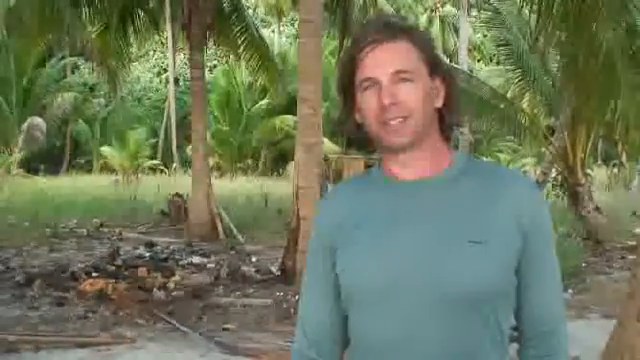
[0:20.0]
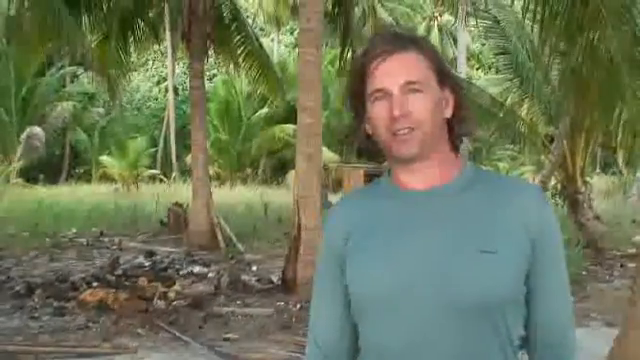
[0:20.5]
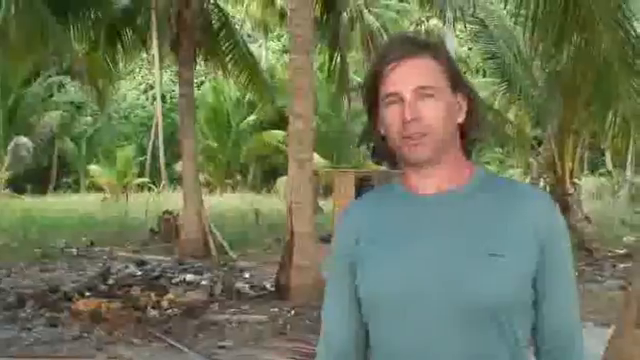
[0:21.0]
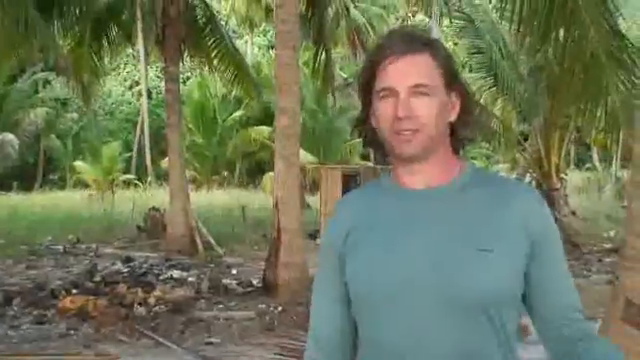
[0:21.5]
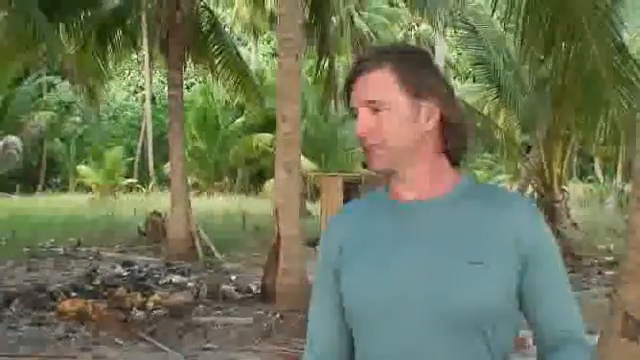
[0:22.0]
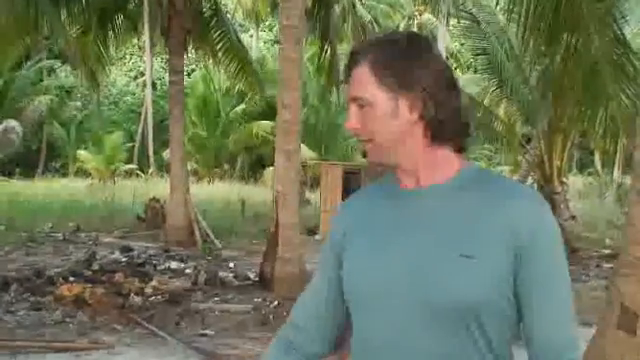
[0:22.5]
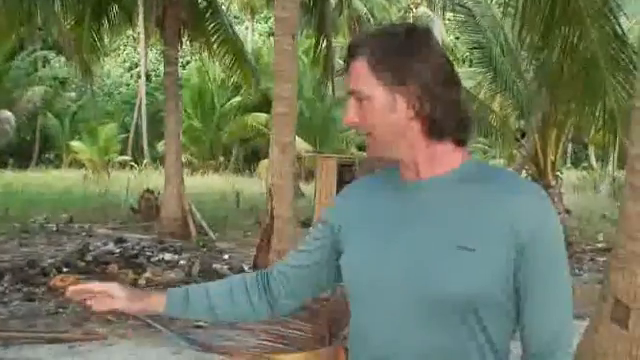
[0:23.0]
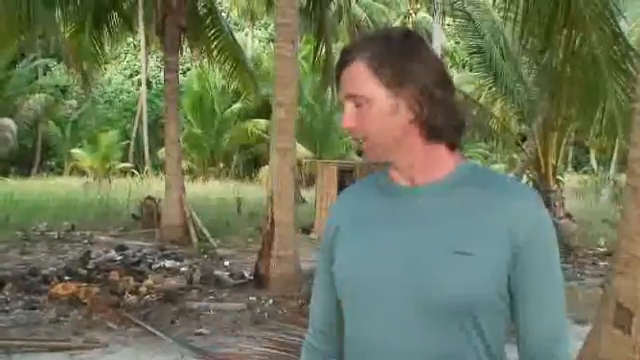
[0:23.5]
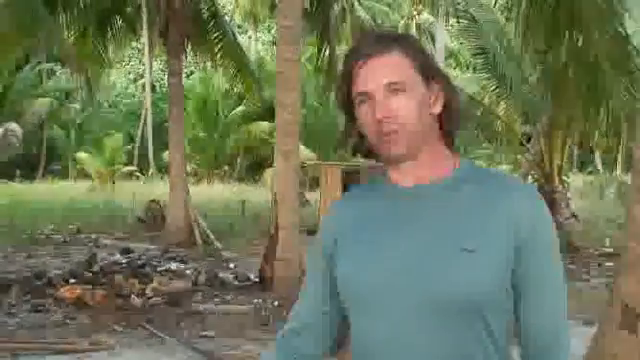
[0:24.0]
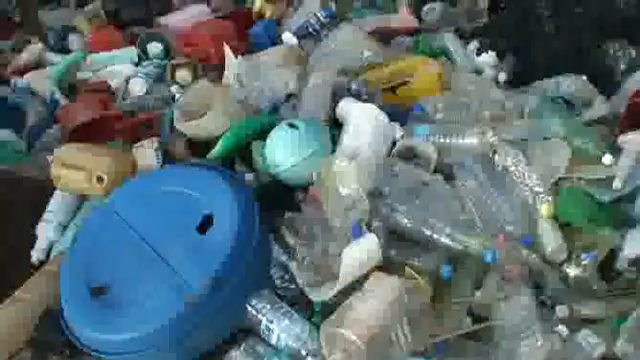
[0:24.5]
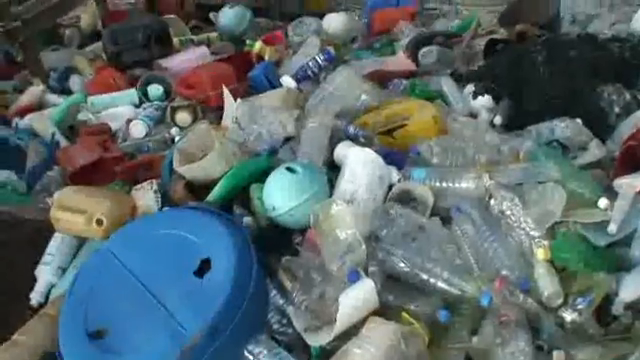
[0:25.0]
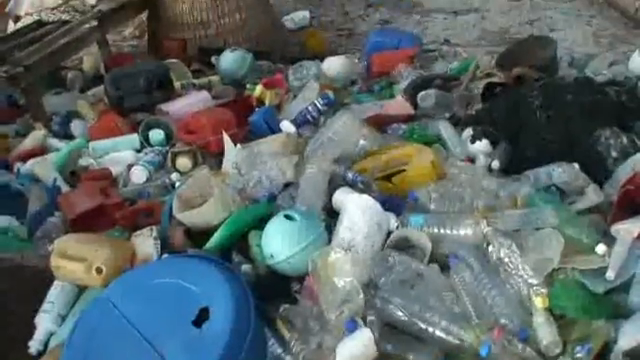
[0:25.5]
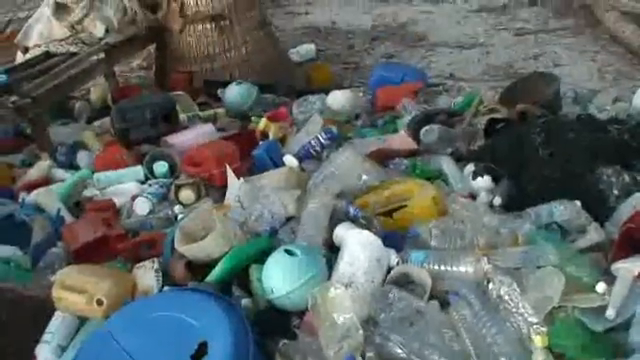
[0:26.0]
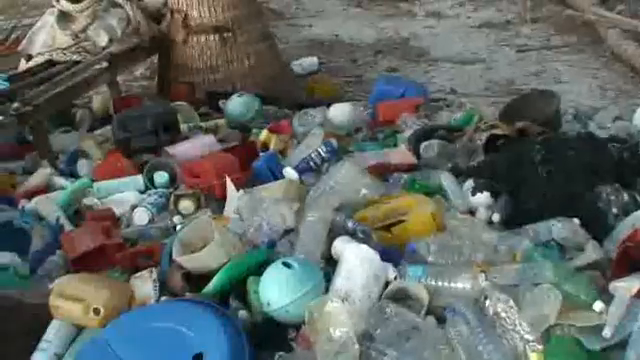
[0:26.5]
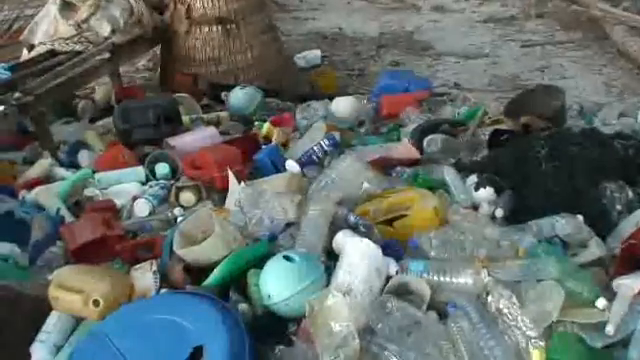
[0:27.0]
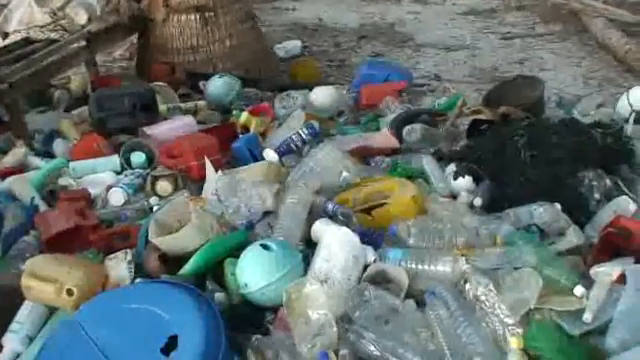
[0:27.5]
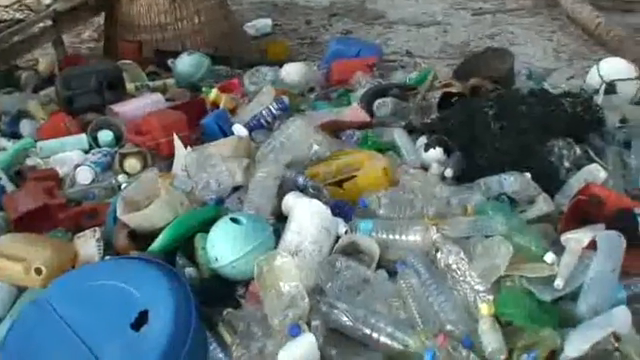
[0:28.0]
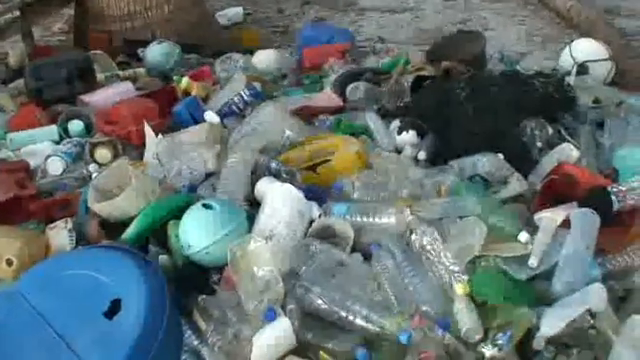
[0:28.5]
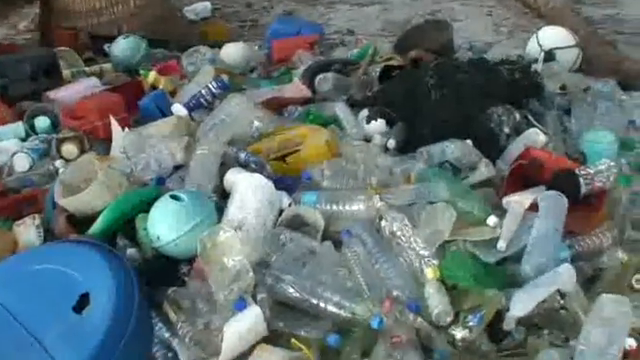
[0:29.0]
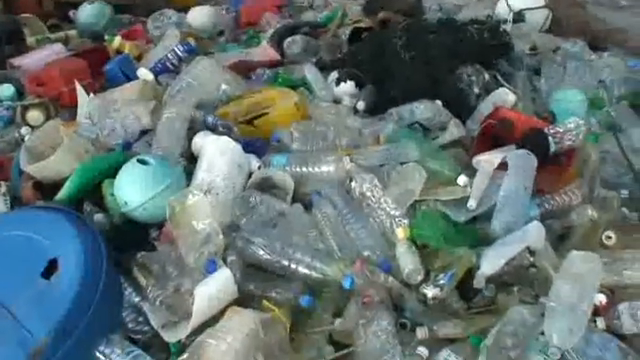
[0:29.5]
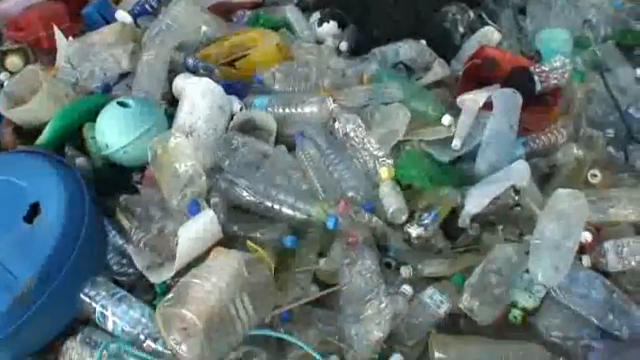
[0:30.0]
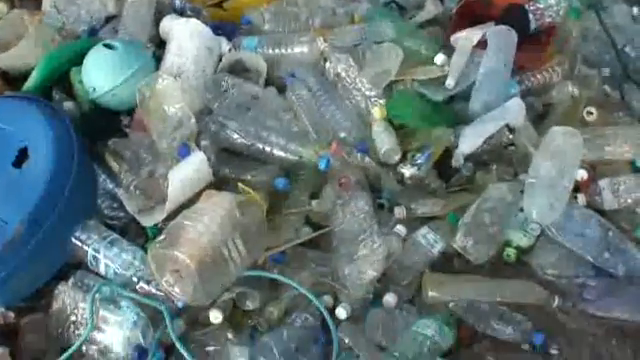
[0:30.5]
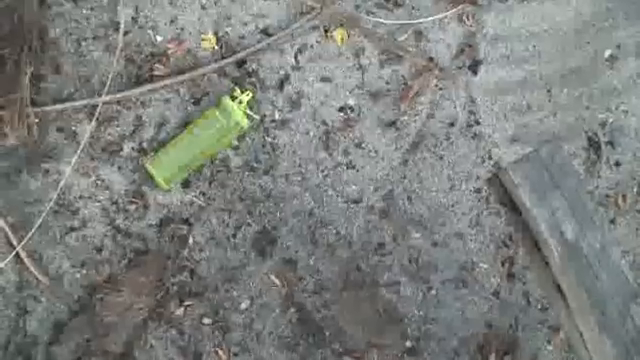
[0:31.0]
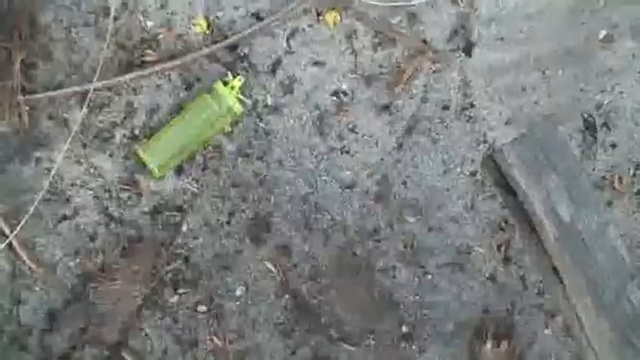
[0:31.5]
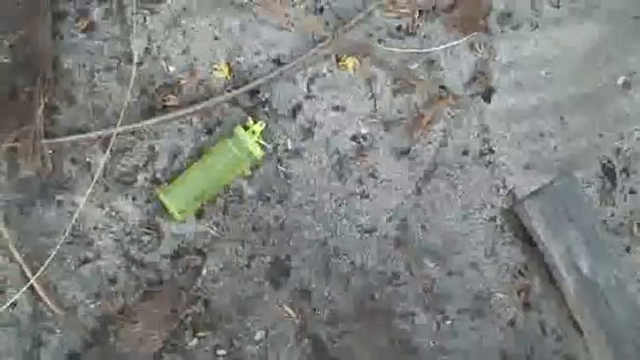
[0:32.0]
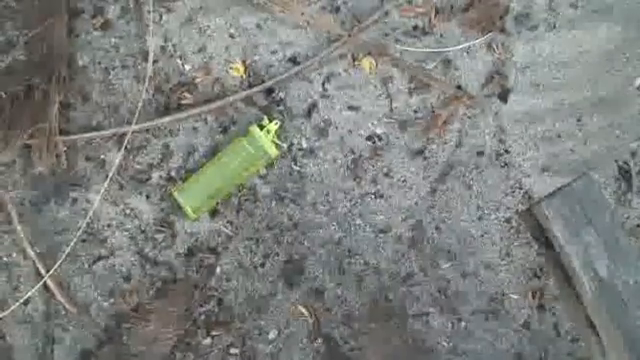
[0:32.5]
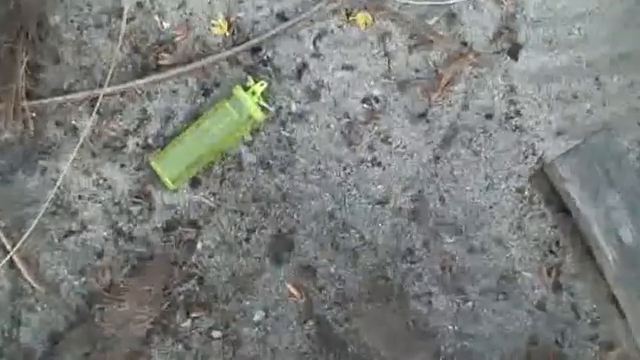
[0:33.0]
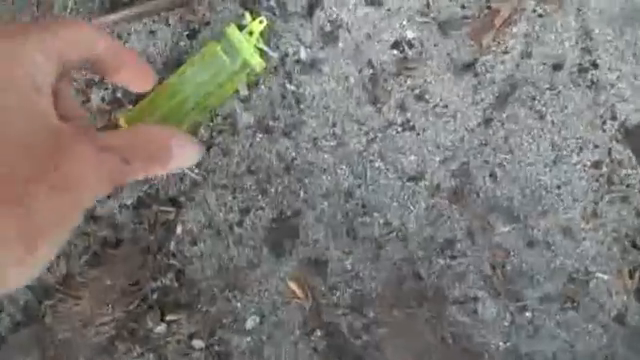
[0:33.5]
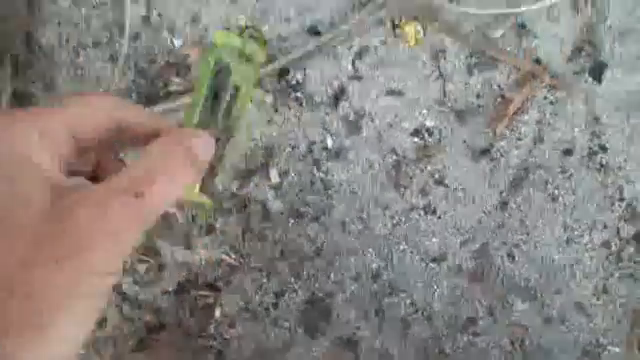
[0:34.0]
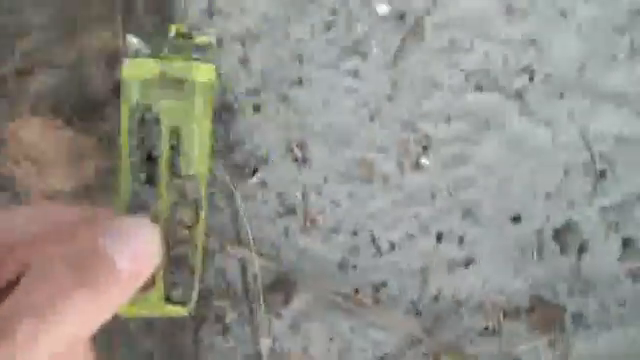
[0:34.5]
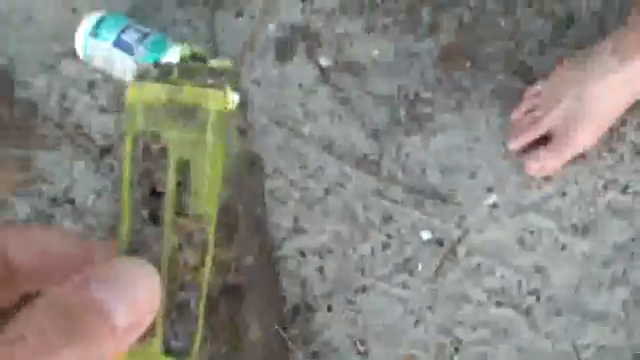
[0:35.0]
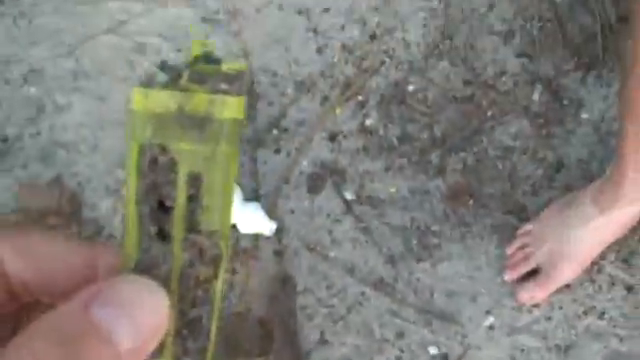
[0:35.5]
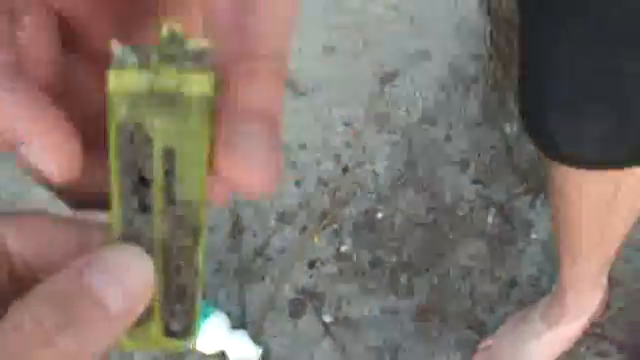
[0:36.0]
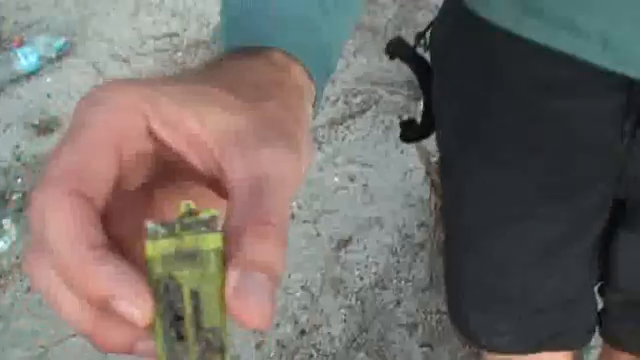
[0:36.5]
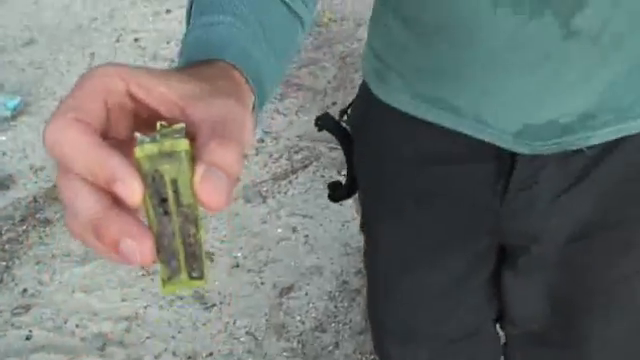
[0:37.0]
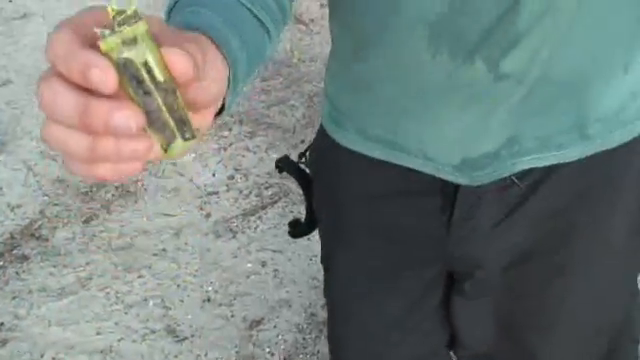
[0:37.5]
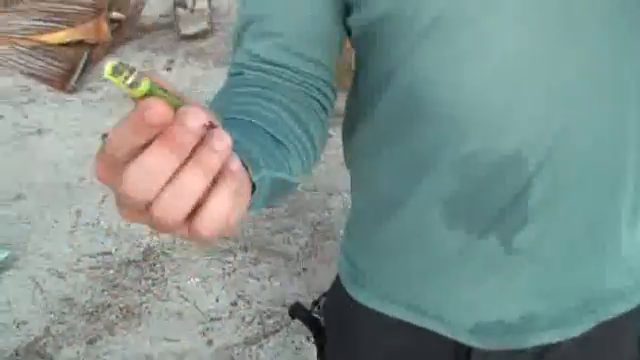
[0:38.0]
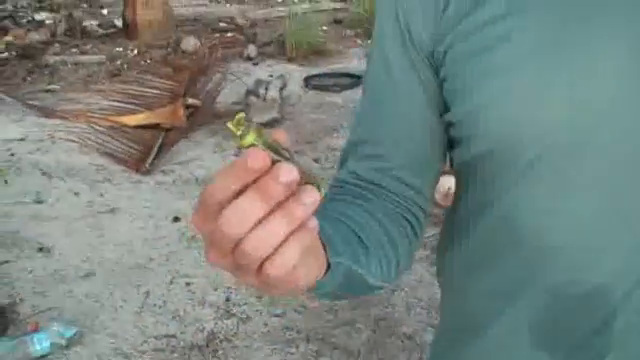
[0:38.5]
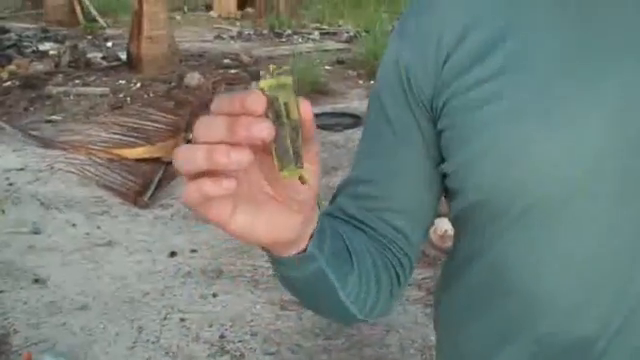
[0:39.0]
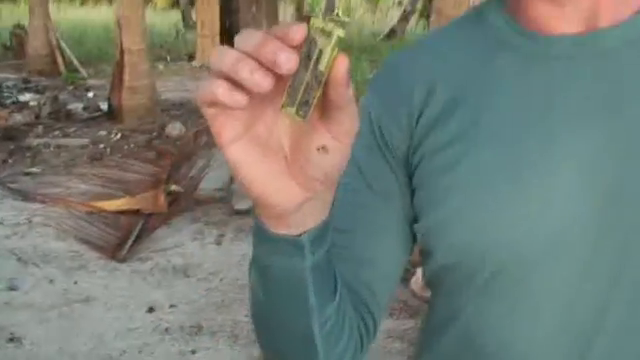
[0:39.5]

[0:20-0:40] The man continues speaking to the camera on the topic of refuse and reuse. The camera shows a heap of garbage containing plastic containers: small 500 mL see-through bottles that still have their plastic wrapping showing company logos. The bottles look like juice or water bottles. The camera keeps shaking as it shows the heap of trash, some of which is pink, white, red and black. A big black bottle, which looks like a 10-liter bottle, is close to the tree. Some of the bottles are still intact and some look squashed. The camera moves around to show the garbage. A yellow lighter is lying on the ground, and beside it is a white bottle that looks like it is for detergent. The person holding the camera picks up the lighter and gives it to the man talking to the camera, who lifts it and shows it to the camera.